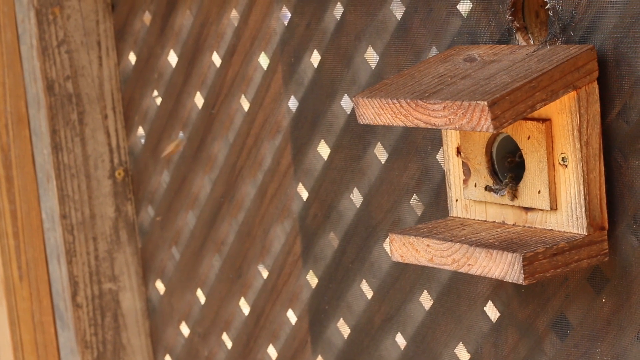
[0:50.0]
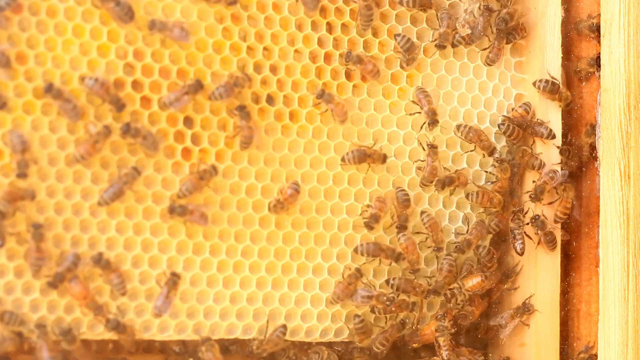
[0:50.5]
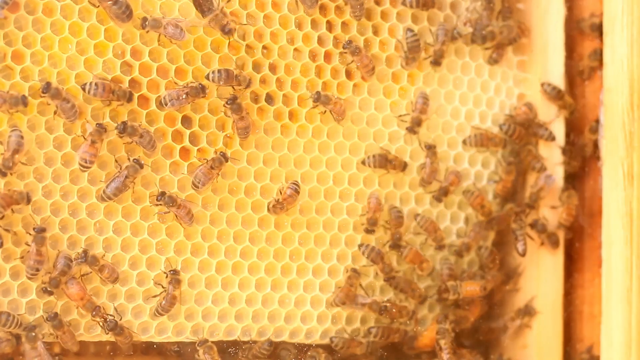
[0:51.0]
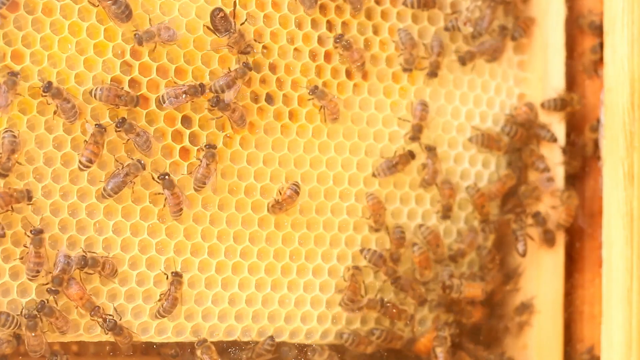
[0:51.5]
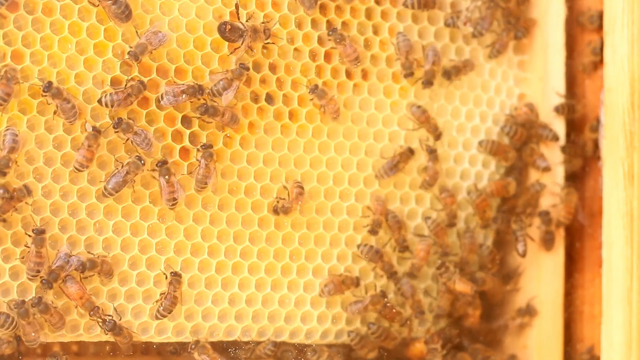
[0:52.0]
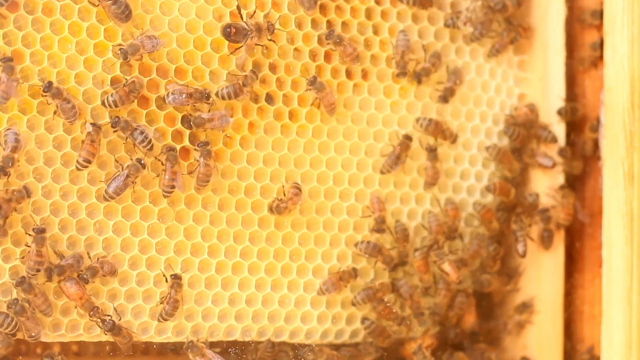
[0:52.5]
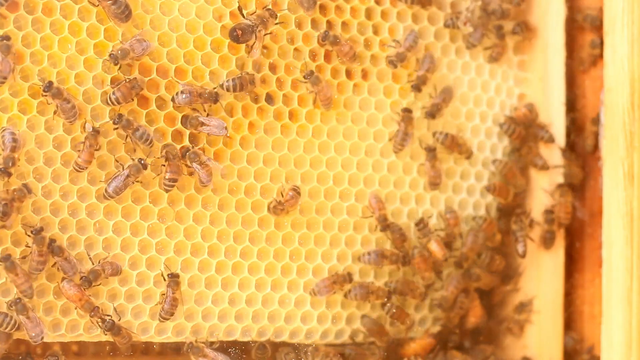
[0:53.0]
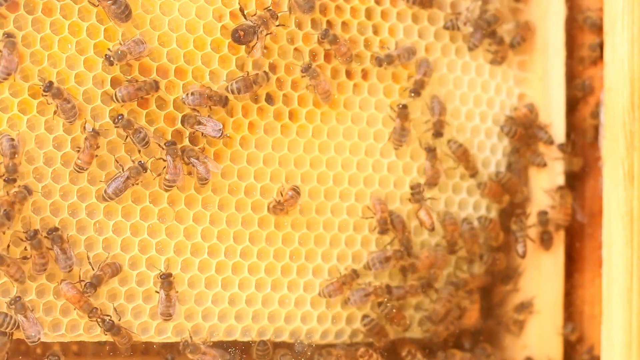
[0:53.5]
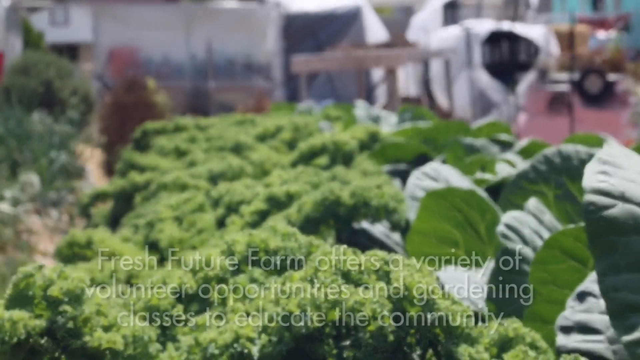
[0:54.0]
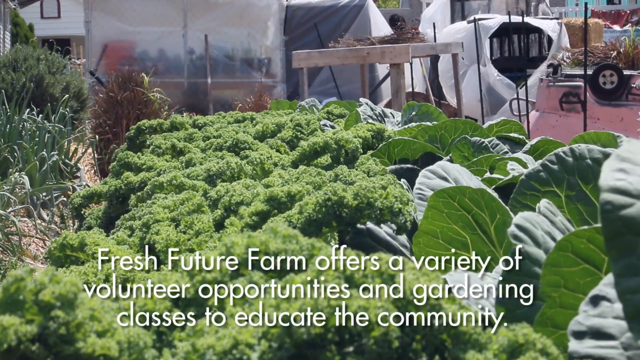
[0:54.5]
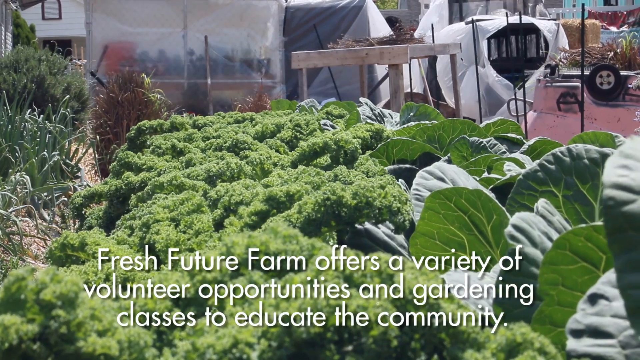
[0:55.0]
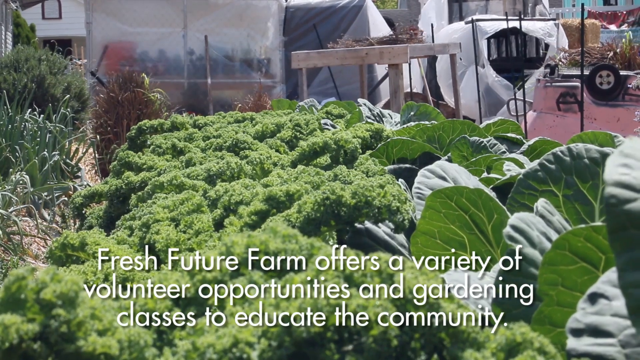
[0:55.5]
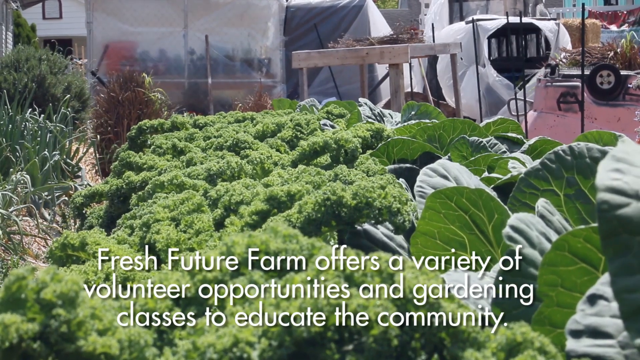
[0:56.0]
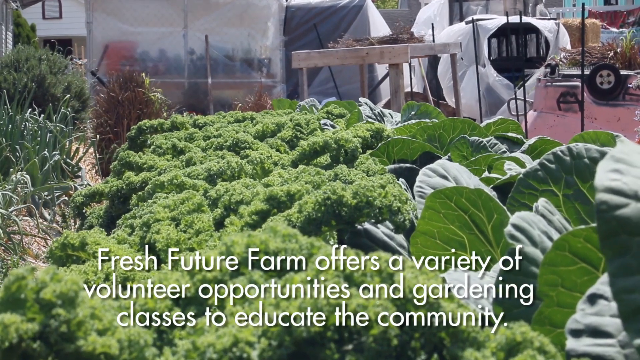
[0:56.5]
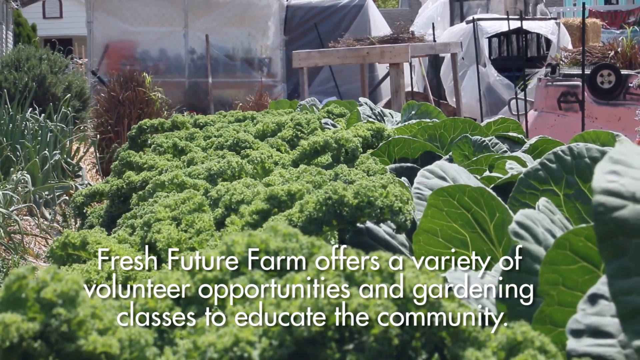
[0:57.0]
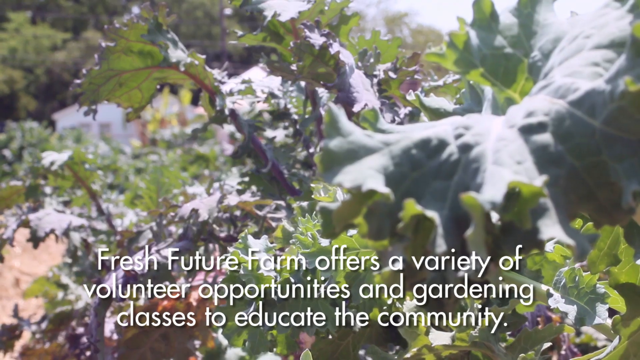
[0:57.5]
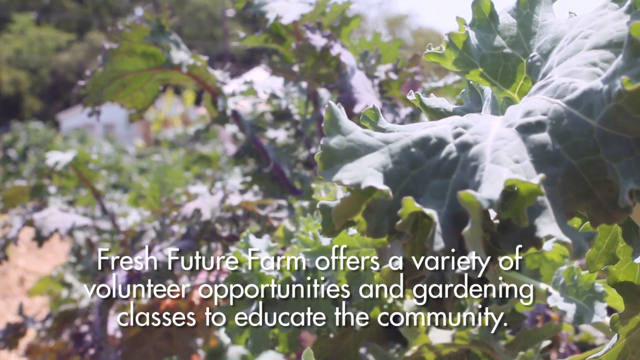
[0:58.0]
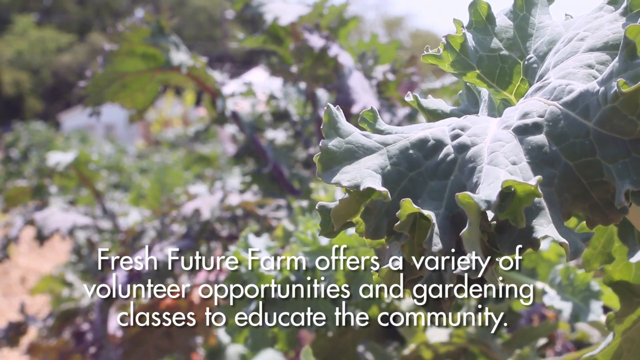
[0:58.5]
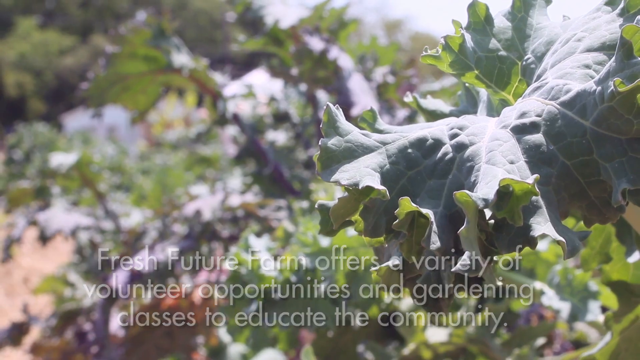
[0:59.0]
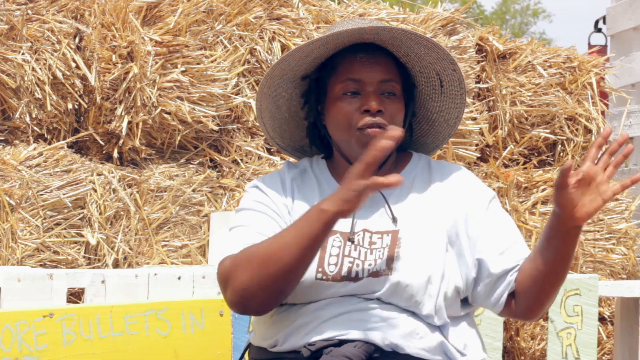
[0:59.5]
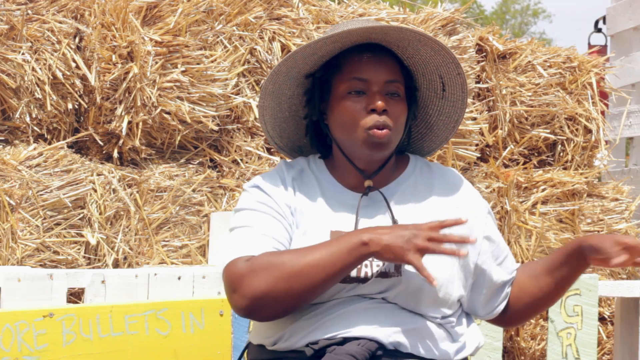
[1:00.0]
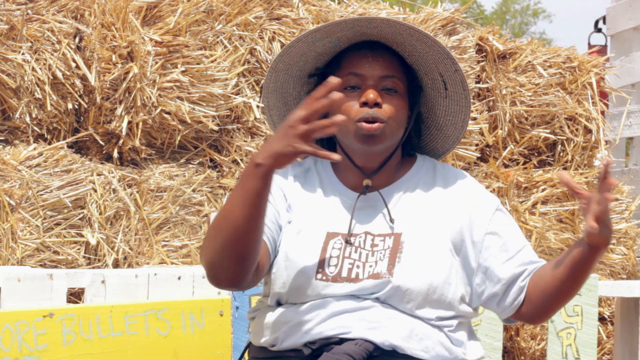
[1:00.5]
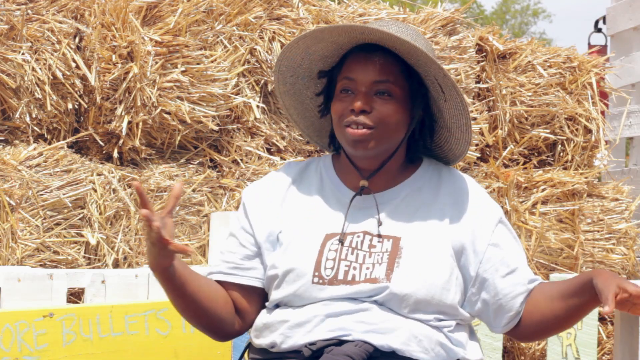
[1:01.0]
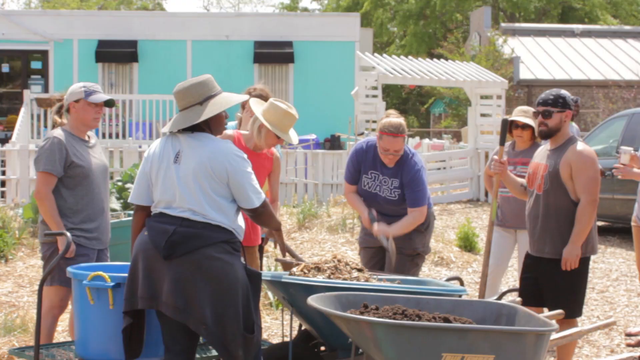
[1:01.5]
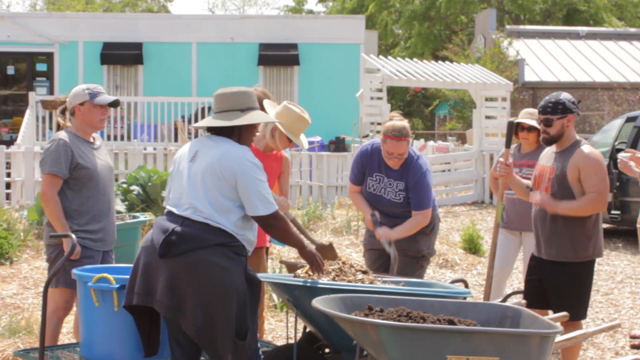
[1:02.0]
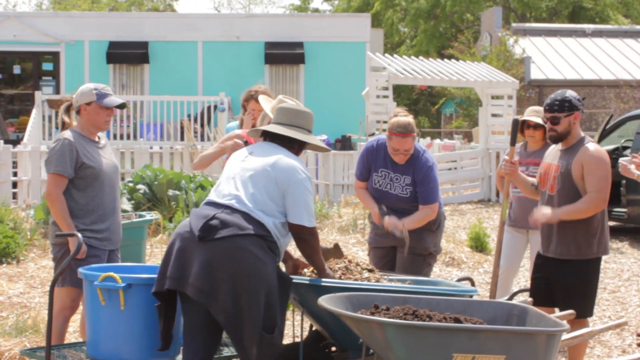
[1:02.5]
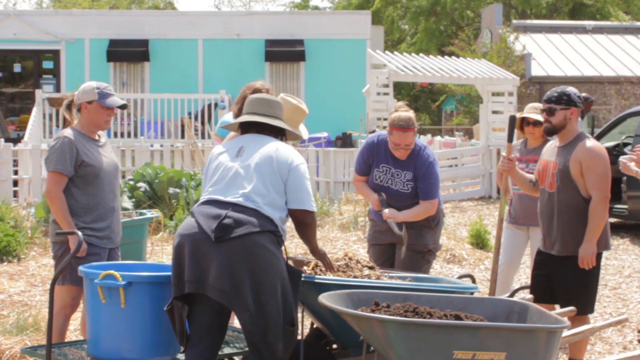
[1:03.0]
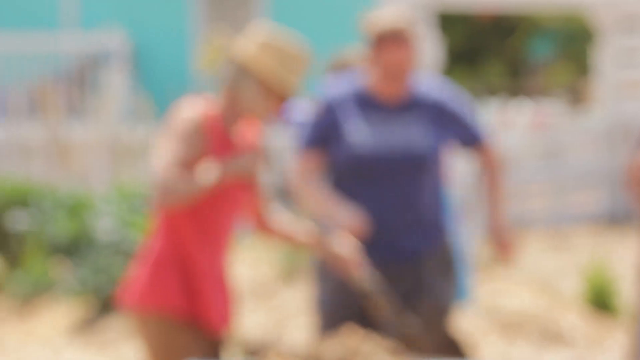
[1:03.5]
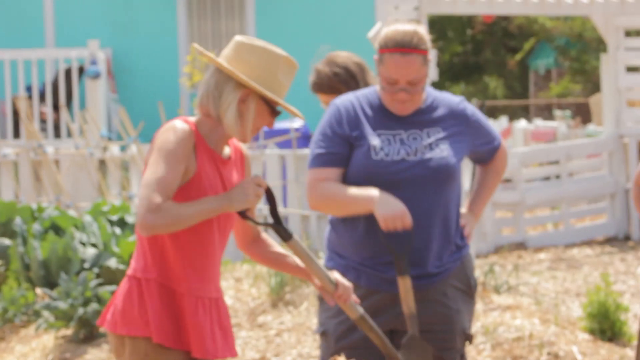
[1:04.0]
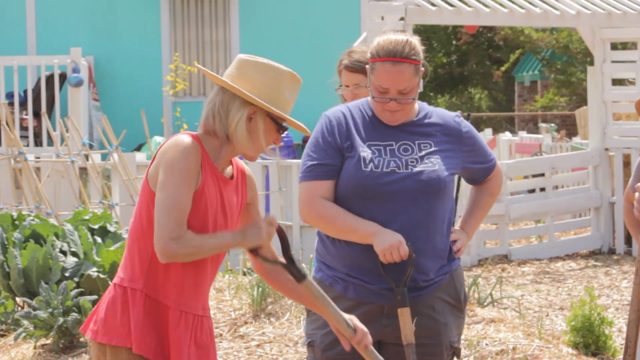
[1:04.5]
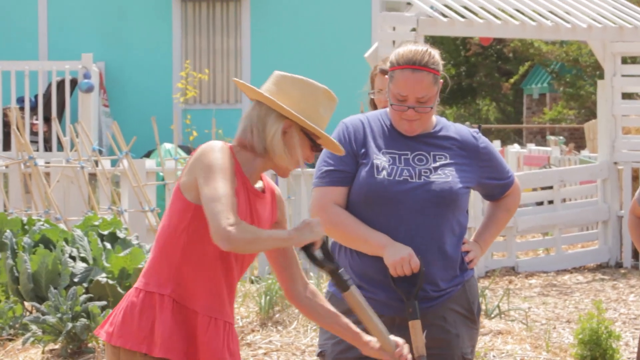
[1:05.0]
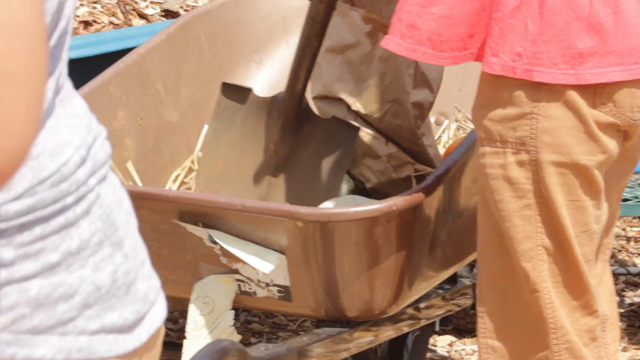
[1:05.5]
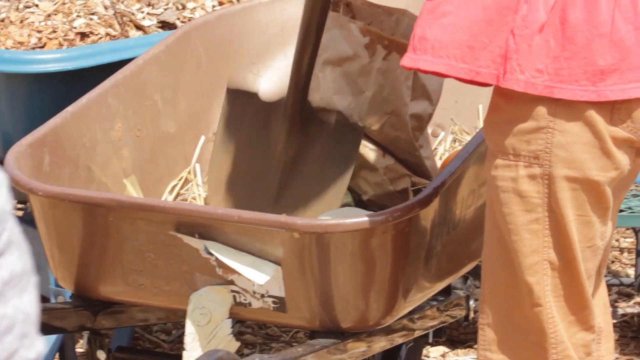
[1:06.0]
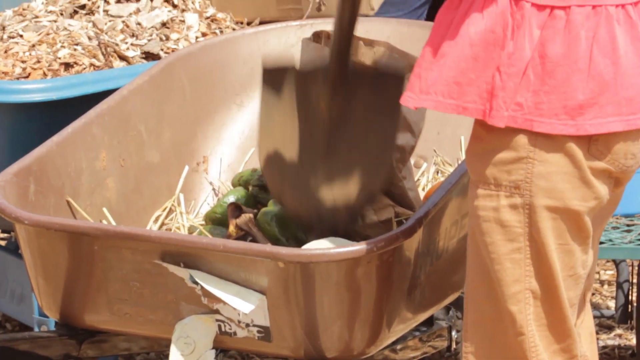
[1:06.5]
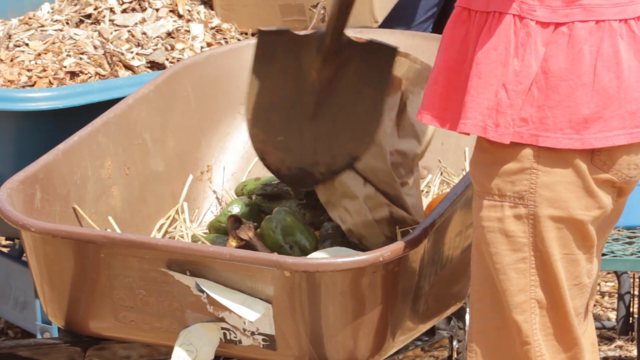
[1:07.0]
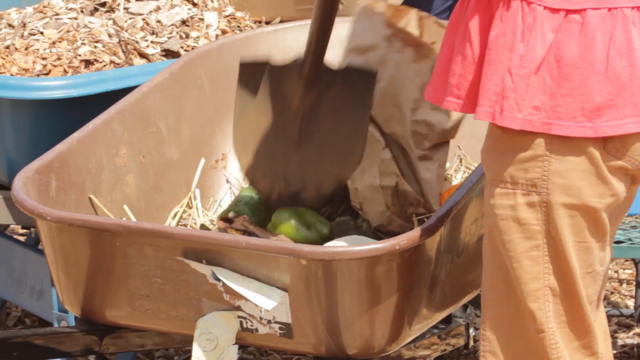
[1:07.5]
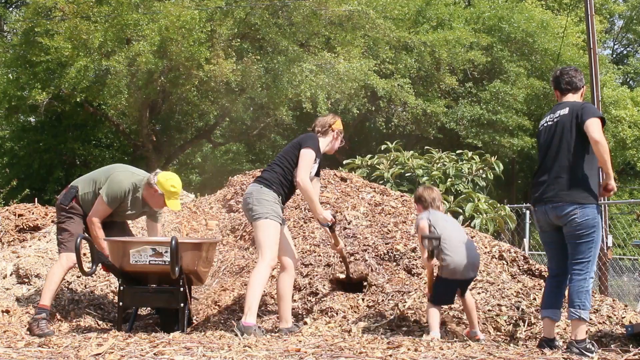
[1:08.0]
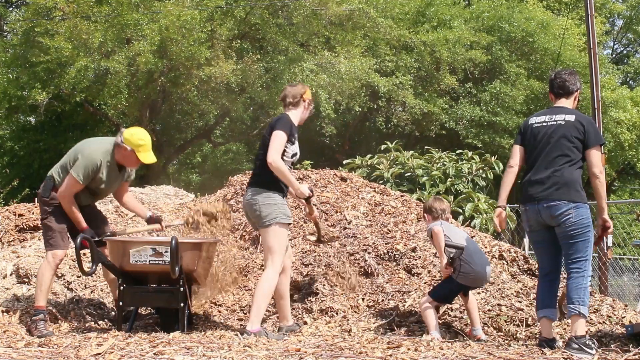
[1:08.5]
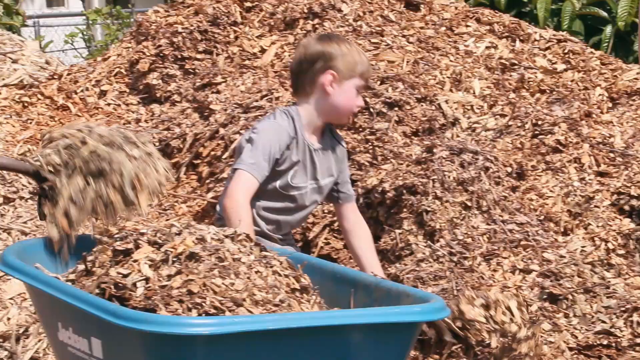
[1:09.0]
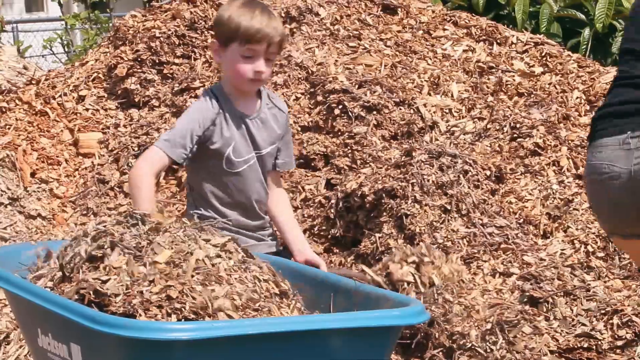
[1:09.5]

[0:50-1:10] A screen shows what looks like a joking-looking bumblebee hanging on a hook outside a bee house, with bees going in and out of the entrance of the beehive. Then white text reads "Fresh Future Farm offers a variety of volunteer opportunities and gardening classes to educate their community." The woman is then seen talking and helping people on the farm, teaching them gardening techniques and putting them to work. Many different people appear, some shoveling mulch and others seemingly crushing produce with their shovels.